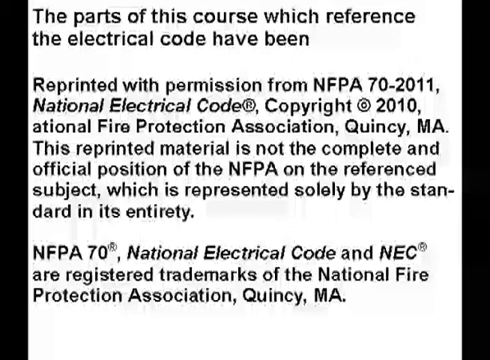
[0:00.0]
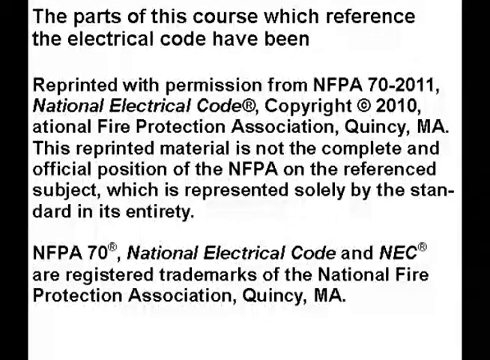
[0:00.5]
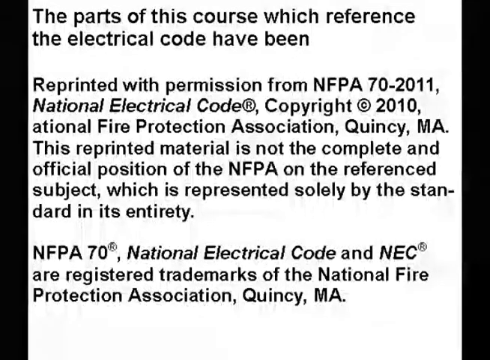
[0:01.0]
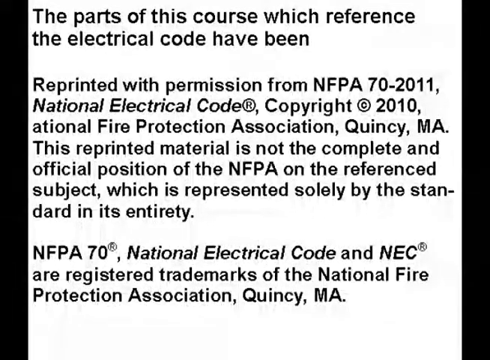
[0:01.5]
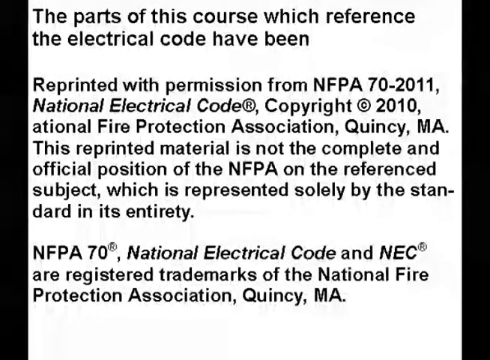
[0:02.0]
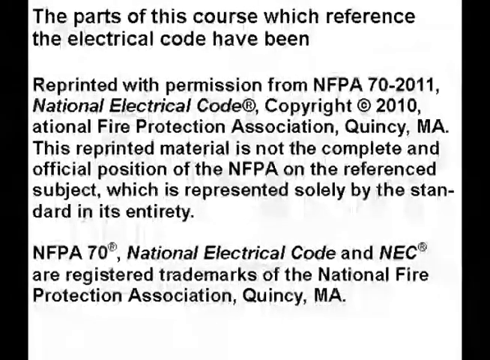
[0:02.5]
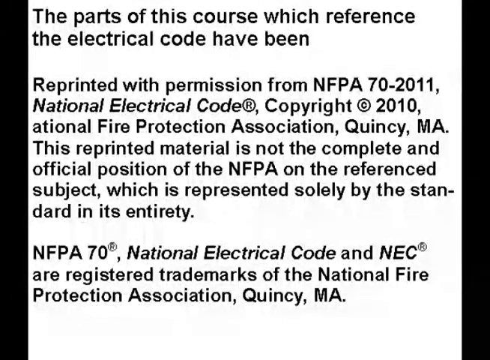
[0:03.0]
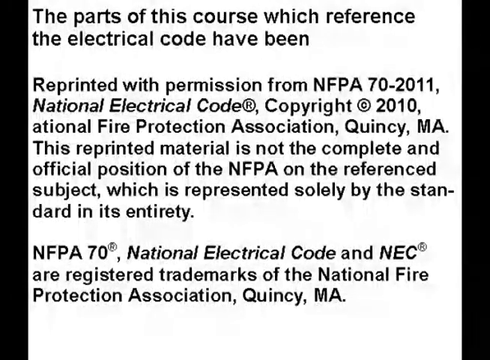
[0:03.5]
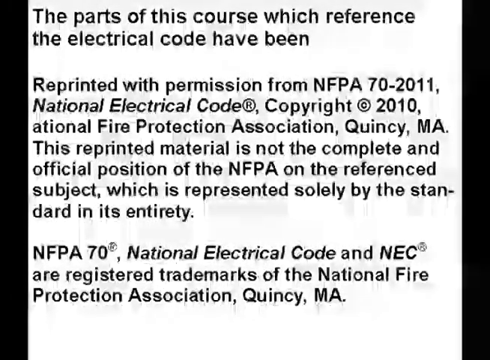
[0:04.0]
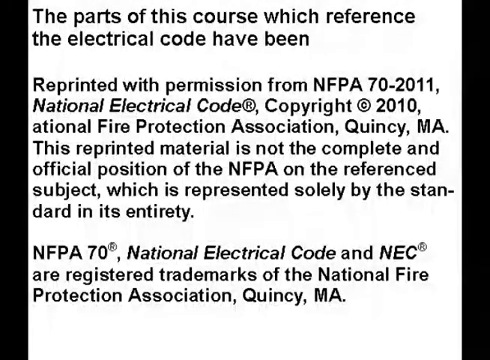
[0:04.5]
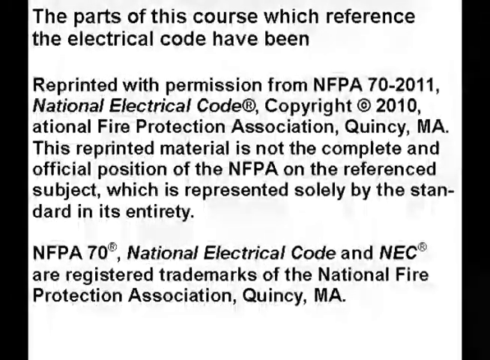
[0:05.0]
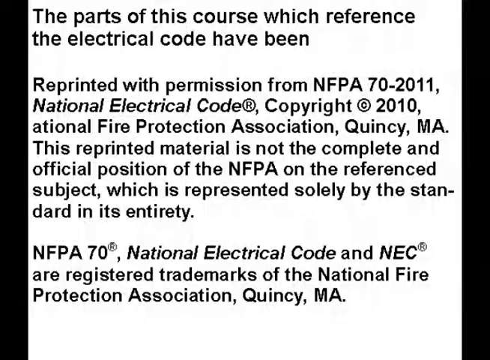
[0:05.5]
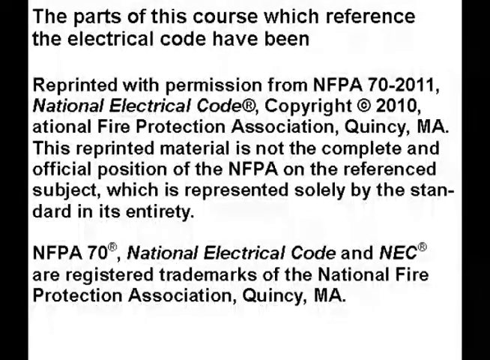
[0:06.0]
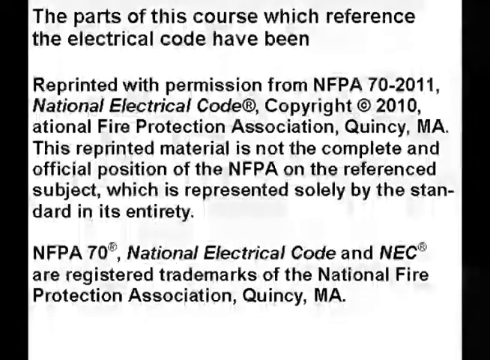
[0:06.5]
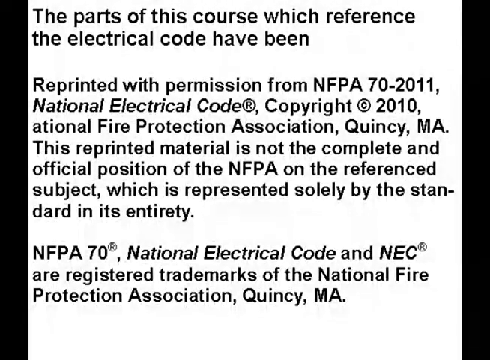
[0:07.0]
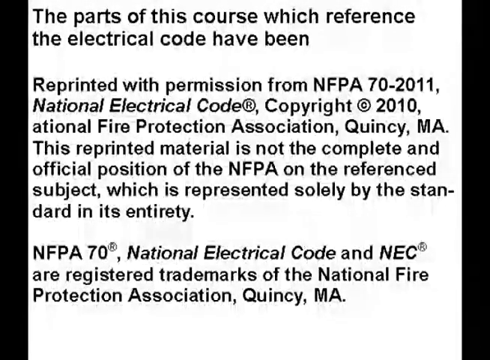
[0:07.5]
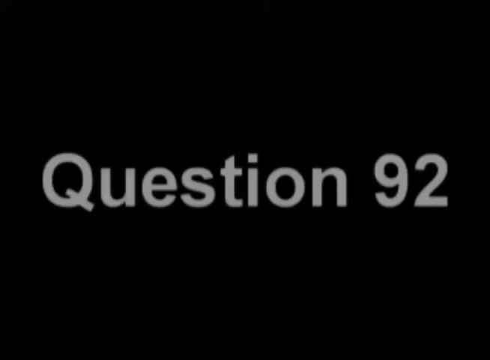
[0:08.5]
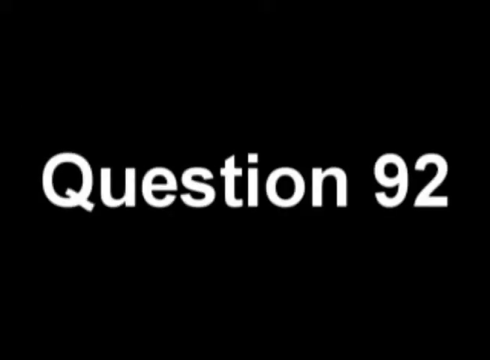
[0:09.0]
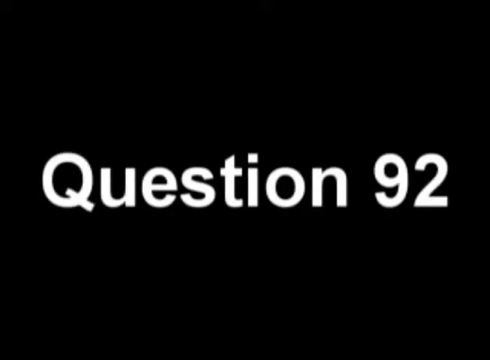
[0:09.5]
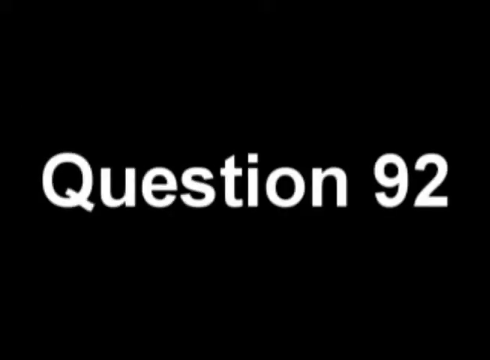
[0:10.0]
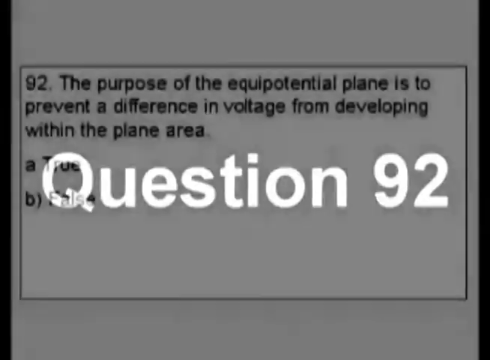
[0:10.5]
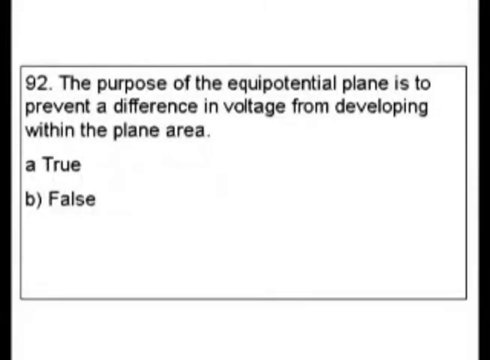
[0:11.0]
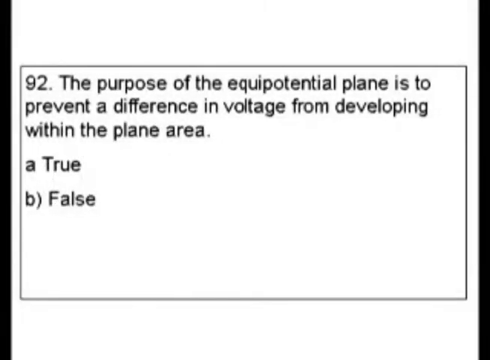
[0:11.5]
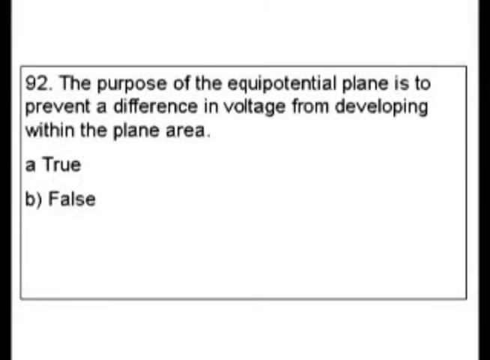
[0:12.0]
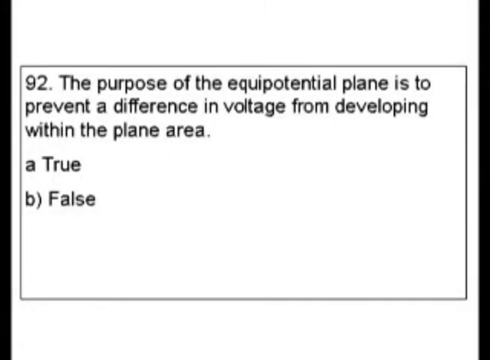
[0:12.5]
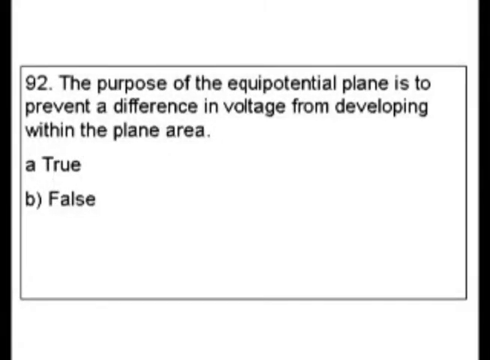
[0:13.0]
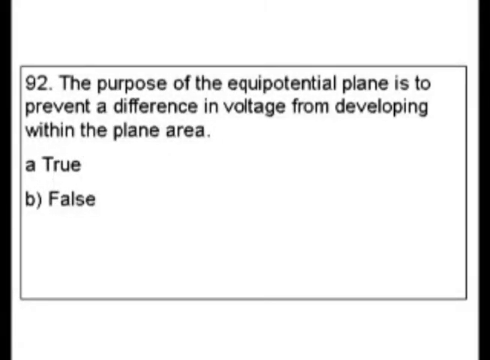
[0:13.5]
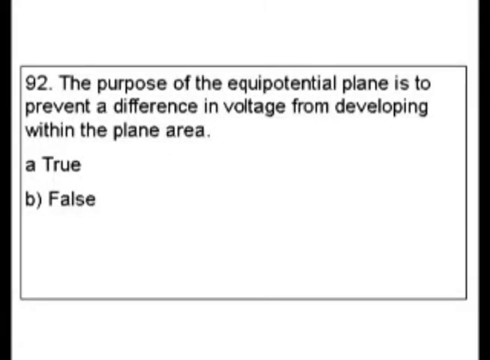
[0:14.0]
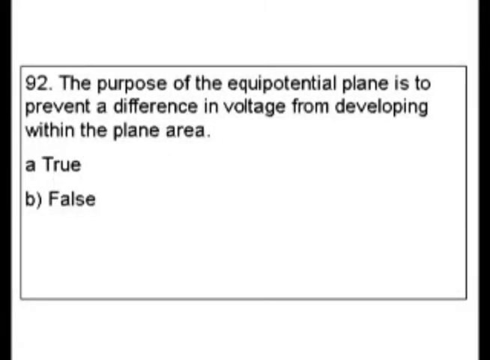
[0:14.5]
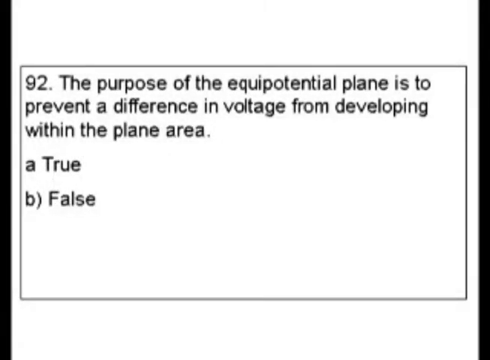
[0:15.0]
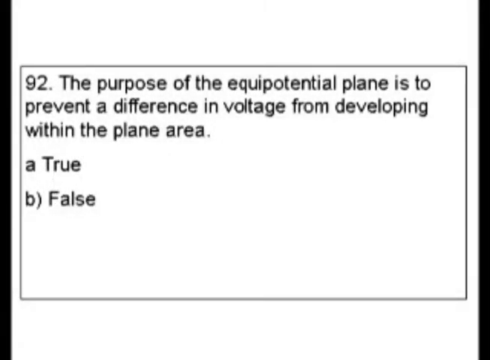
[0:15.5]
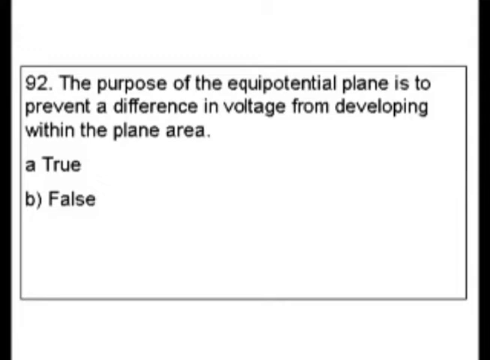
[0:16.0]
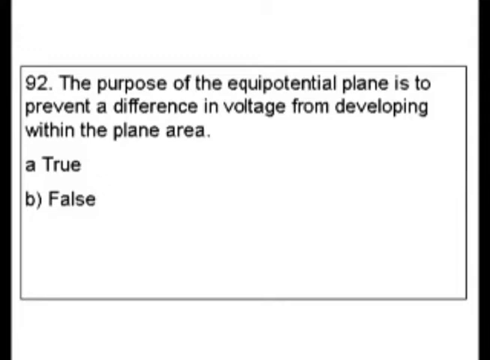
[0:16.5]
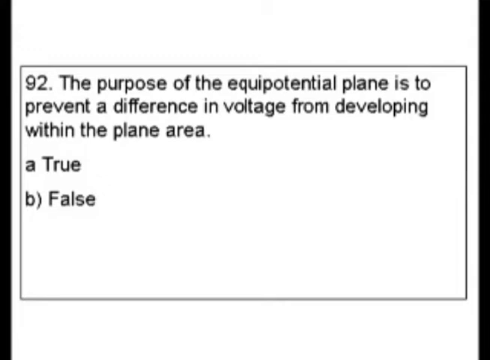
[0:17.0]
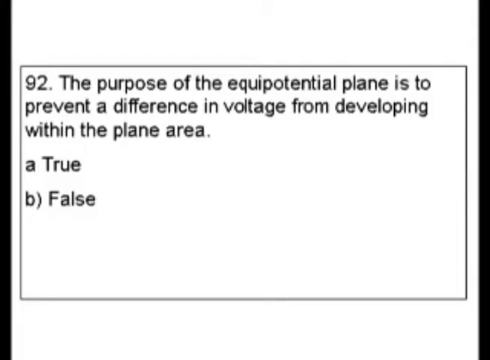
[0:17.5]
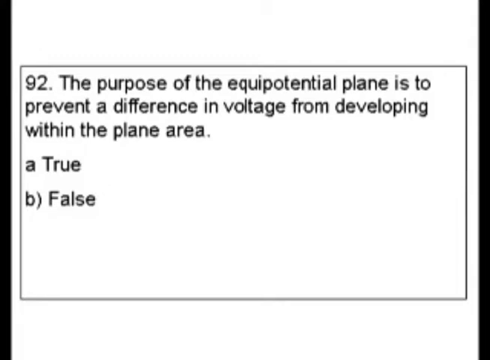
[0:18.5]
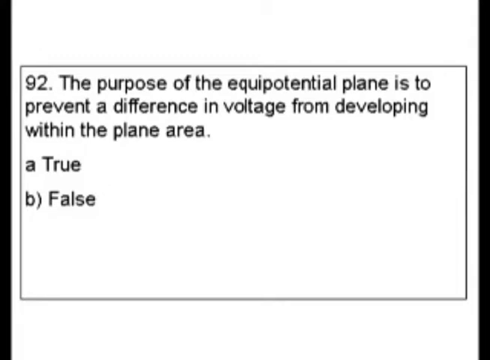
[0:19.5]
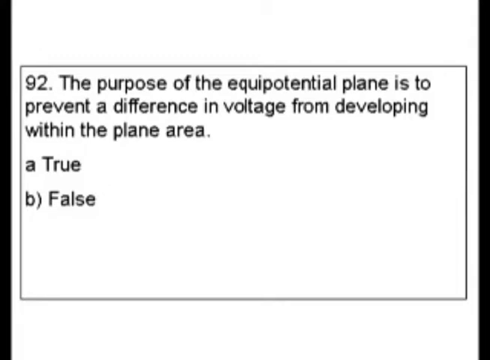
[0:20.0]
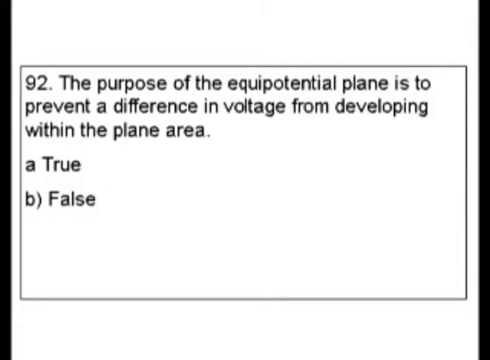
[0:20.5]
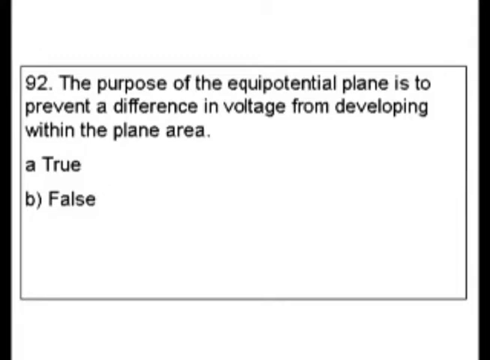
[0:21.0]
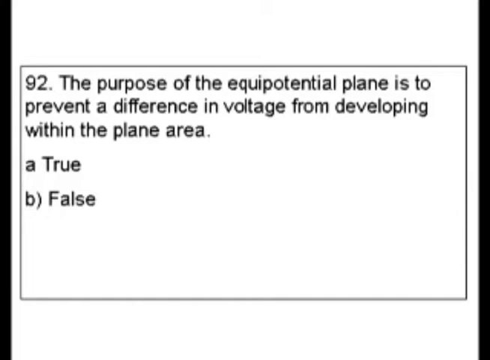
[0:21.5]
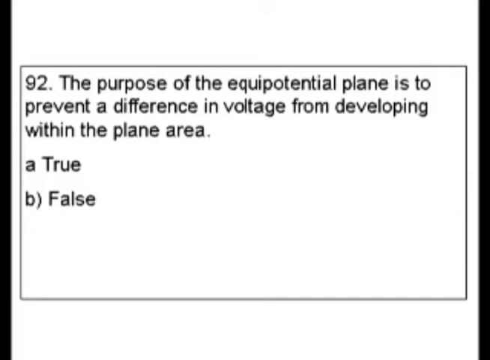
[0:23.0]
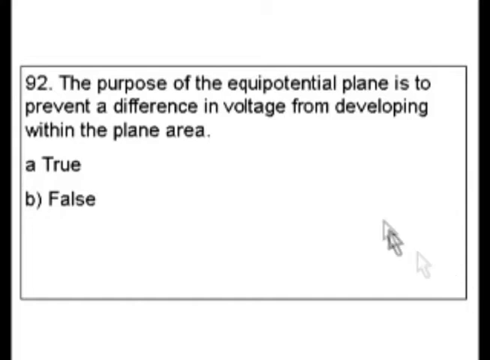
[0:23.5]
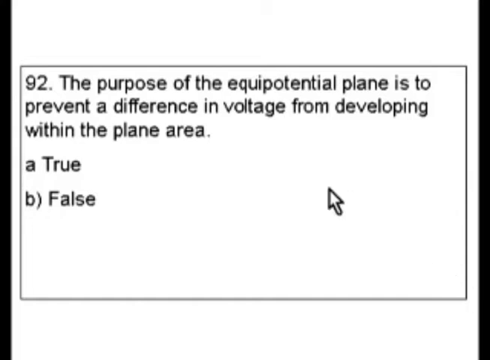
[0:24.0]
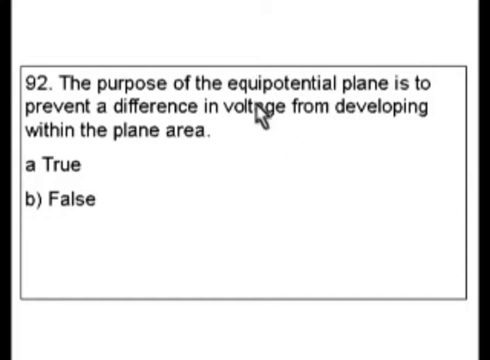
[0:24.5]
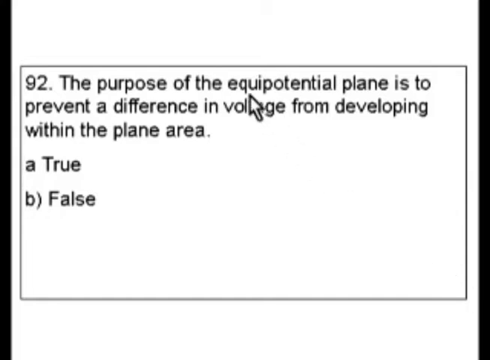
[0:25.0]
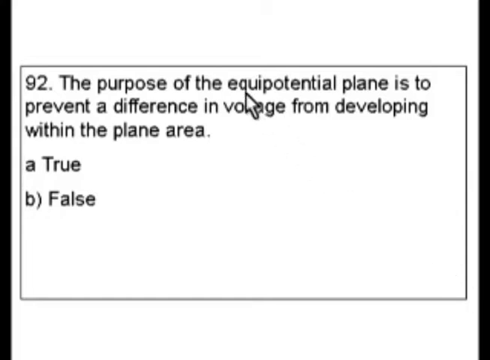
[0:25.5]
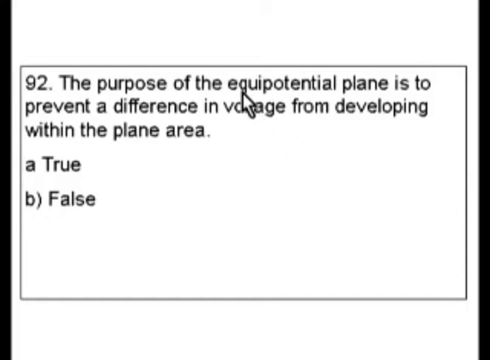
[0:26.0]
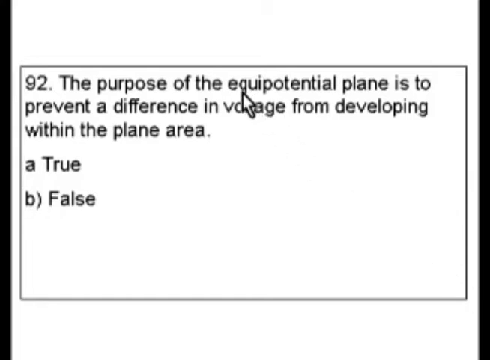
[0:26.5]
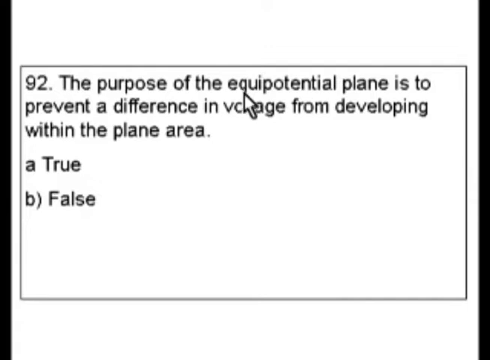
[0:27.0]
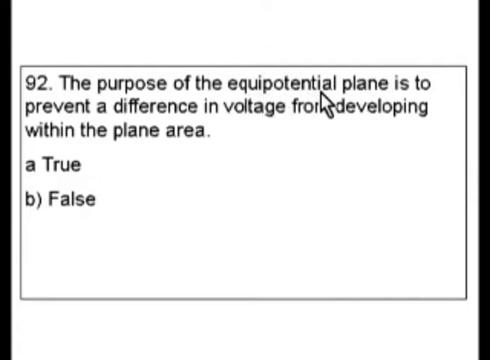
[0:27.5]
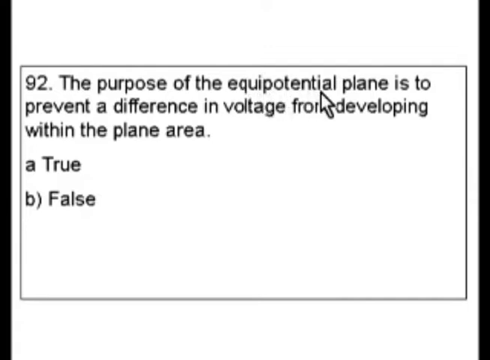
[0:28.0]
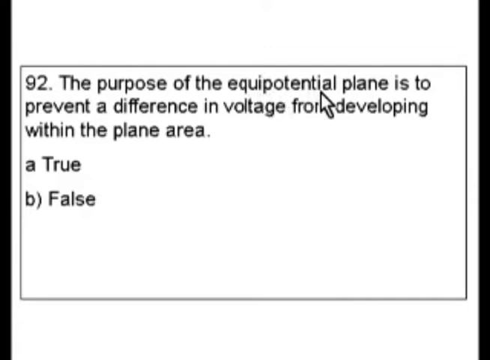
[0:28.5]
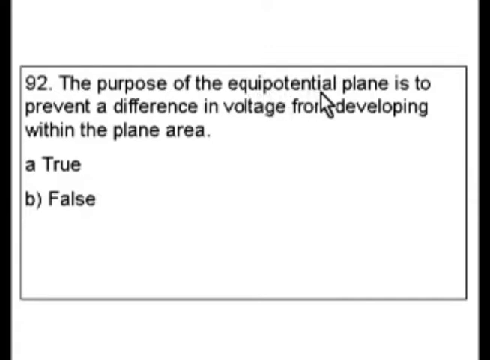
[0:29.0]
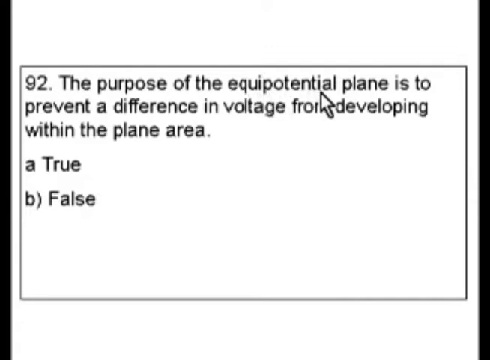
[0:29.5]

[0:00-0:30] A white background has black font over it. The text reads: "The parts of this course which reference the Electrical Code have been reprinted with permission from NFPA 70-2011 National Electrical Code" … "National Fire Protection Association, Quincy, Massachusetts. This reprinted material is not the complete and official position of the NFPA on the referenced subject which is represented solely by the standard in its entirety. NFPA 70 National Electrical Code and NEC are registered trademarks of the National Fire Protection Association, Quincy, Massachusetts." The screen then goes black and "question 92" appears in white. Next, a white screen reads: "92. The purpose of the equipotential plane is to prevent a difference in voltage from developing within the plane area. A true, B false." A cursor appears on the screen, apparently on a computer screen, and the word "equipotential" is highlighted.